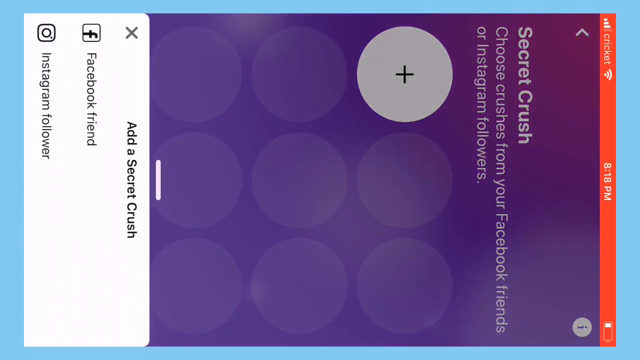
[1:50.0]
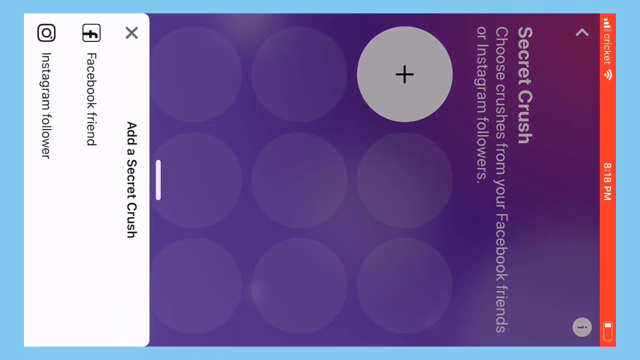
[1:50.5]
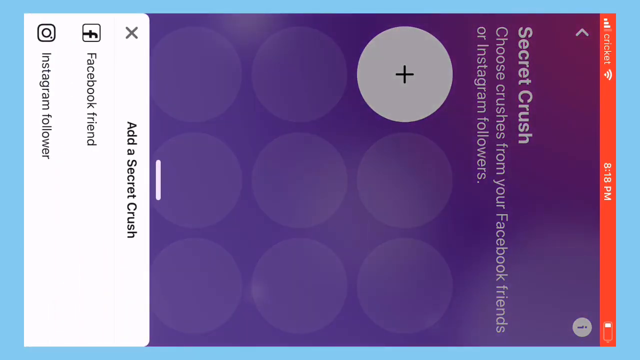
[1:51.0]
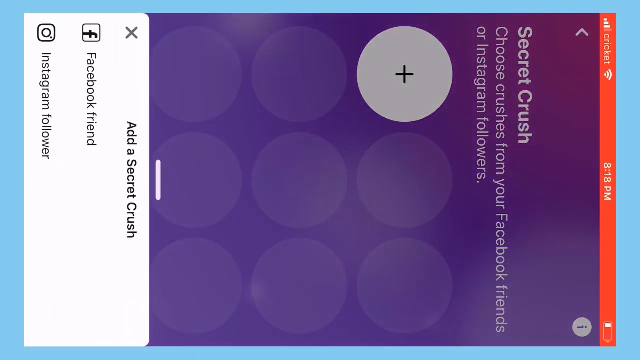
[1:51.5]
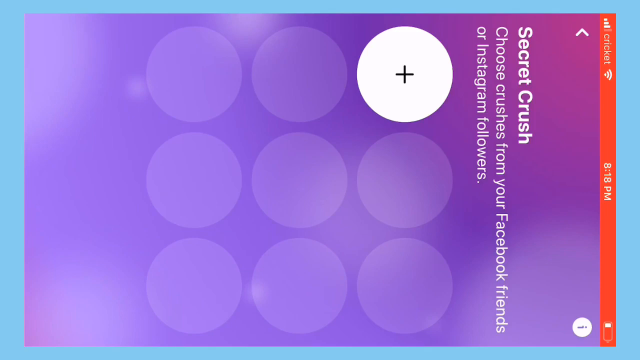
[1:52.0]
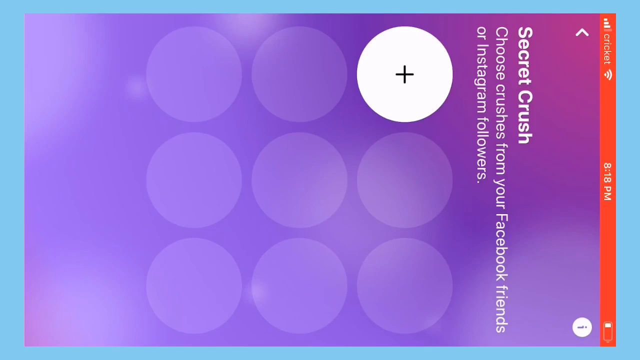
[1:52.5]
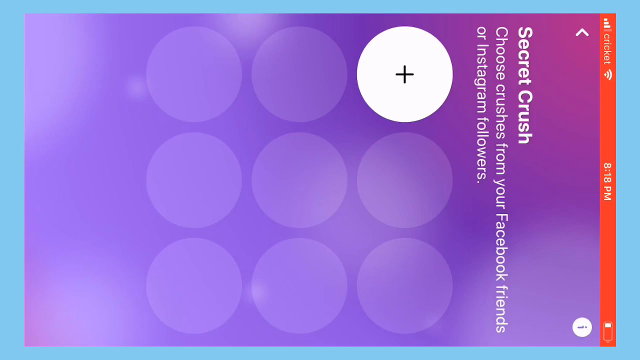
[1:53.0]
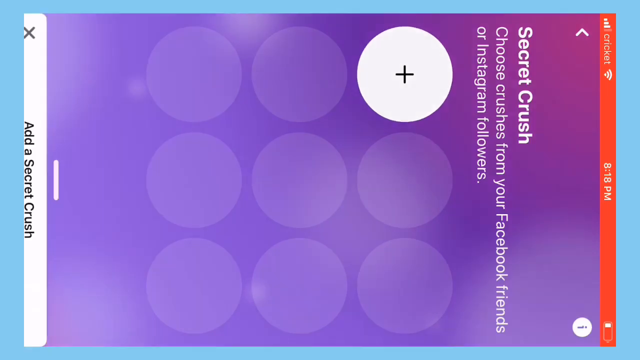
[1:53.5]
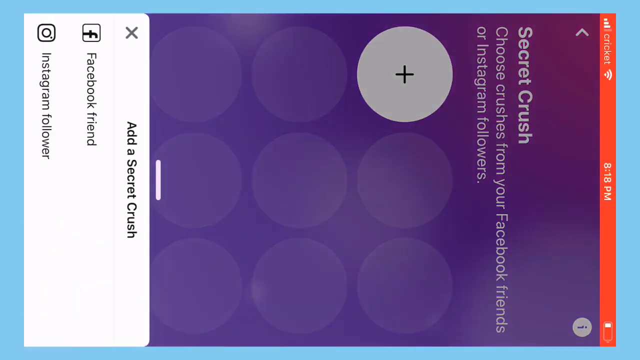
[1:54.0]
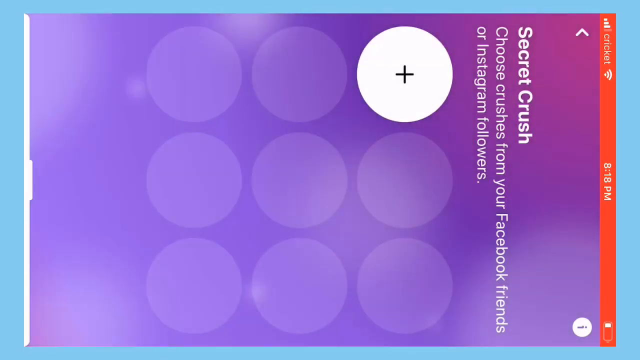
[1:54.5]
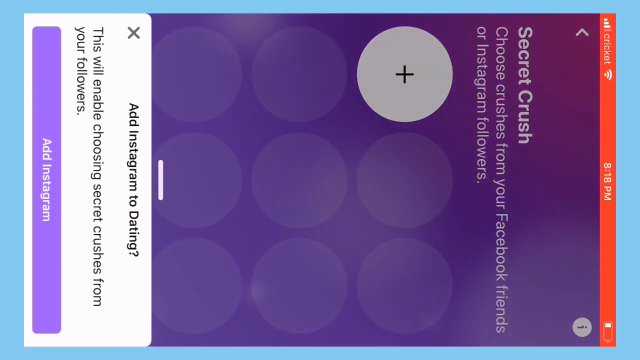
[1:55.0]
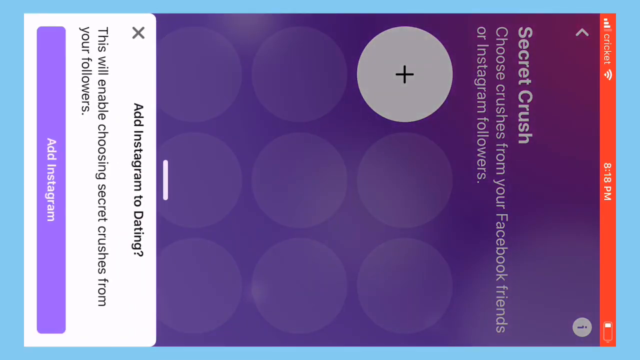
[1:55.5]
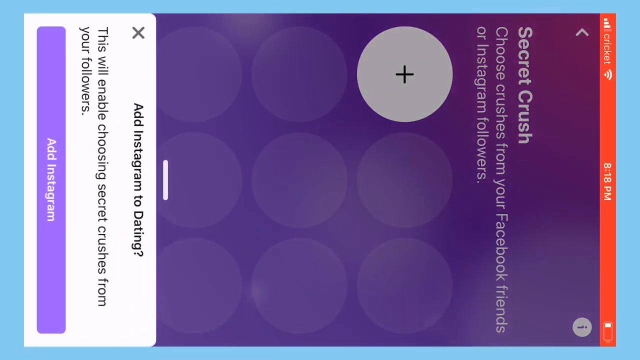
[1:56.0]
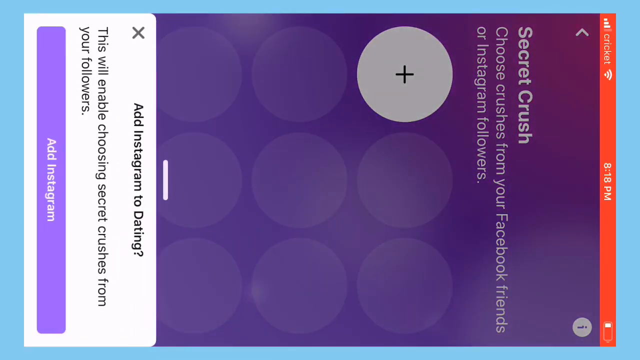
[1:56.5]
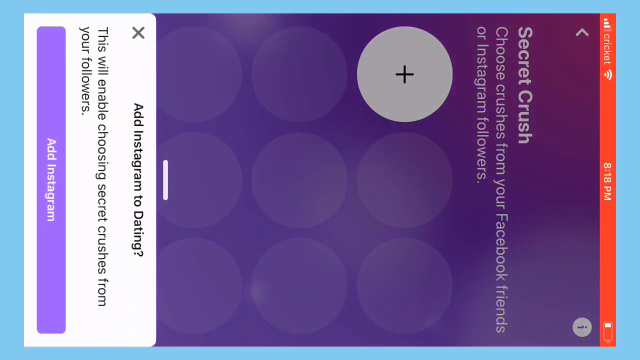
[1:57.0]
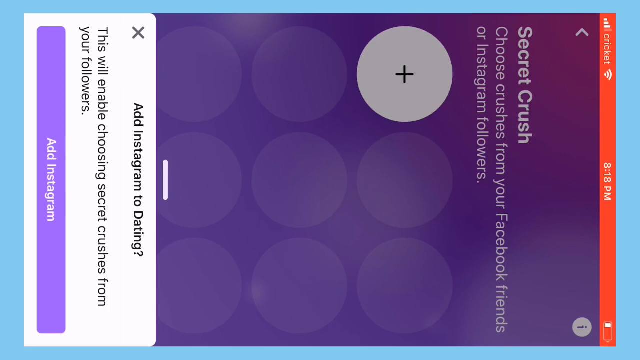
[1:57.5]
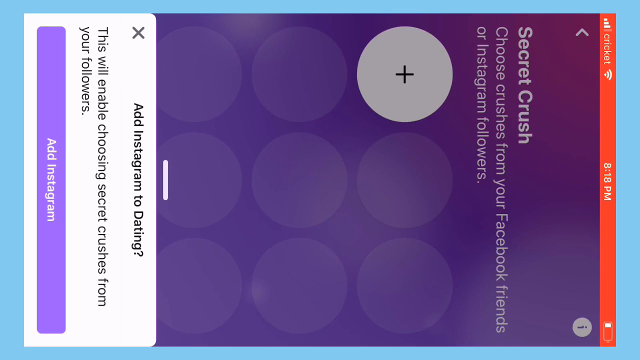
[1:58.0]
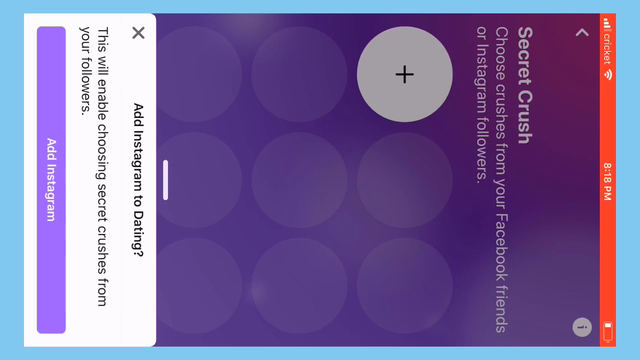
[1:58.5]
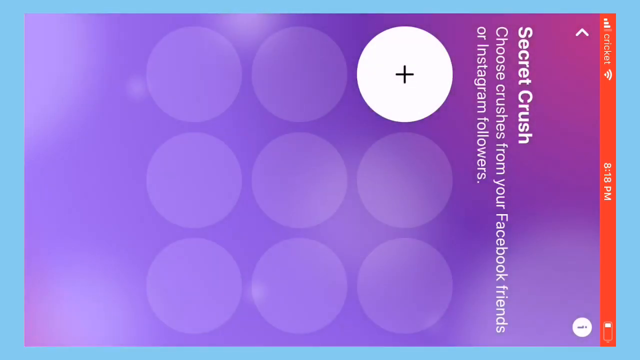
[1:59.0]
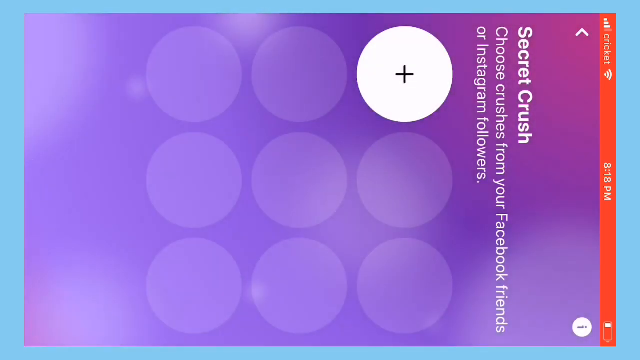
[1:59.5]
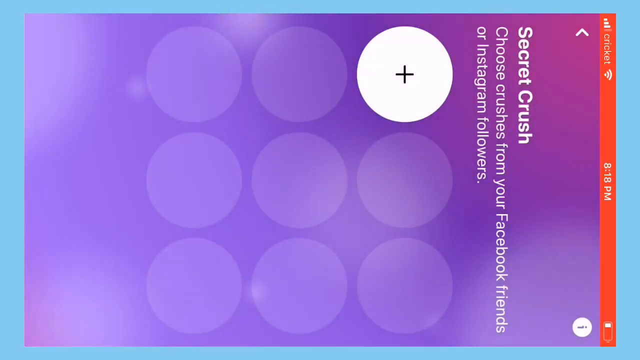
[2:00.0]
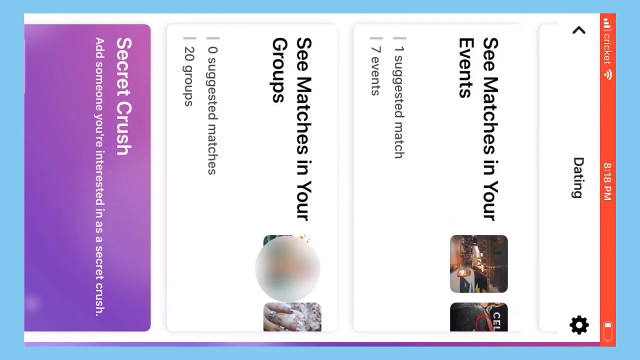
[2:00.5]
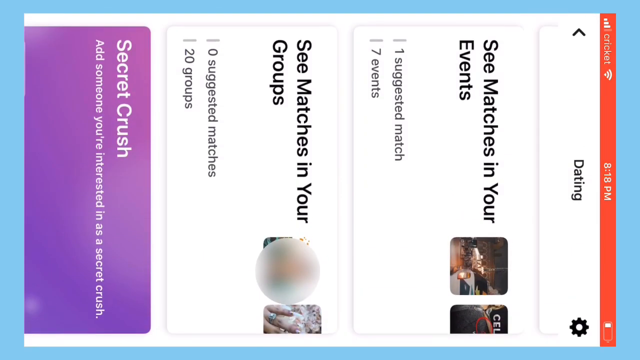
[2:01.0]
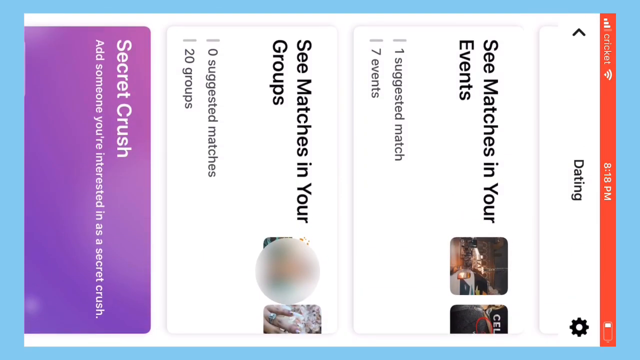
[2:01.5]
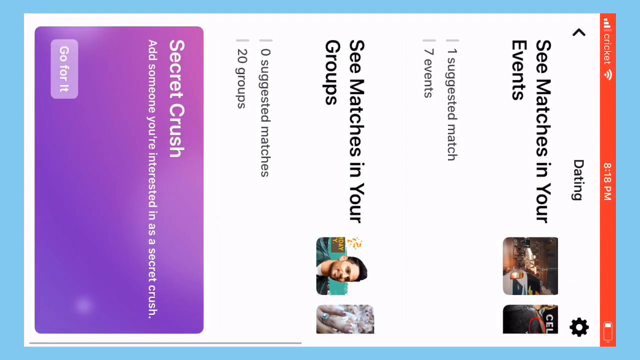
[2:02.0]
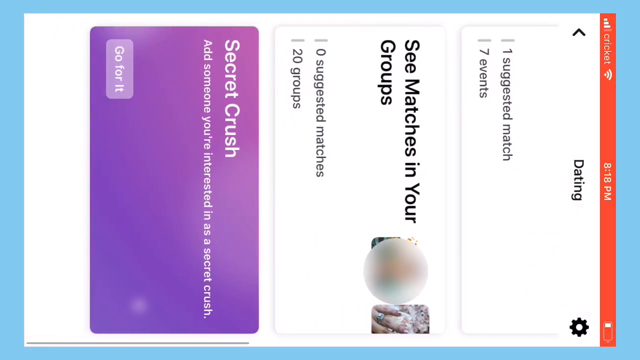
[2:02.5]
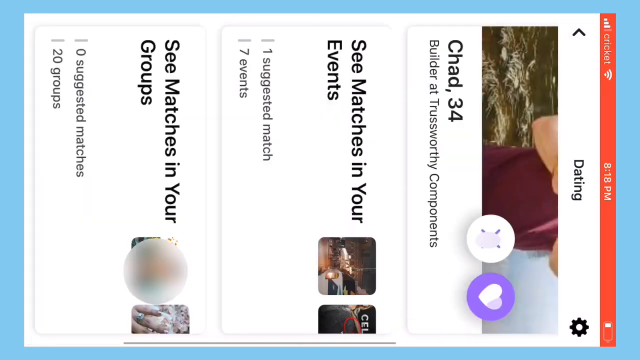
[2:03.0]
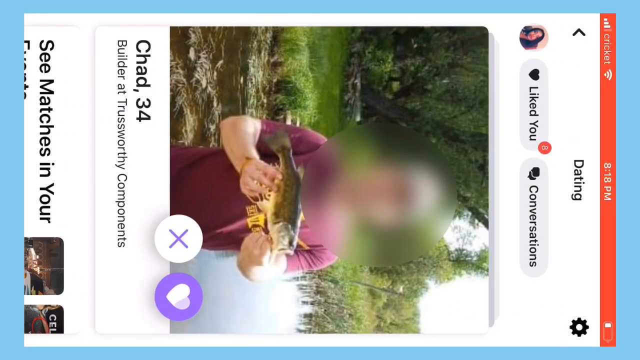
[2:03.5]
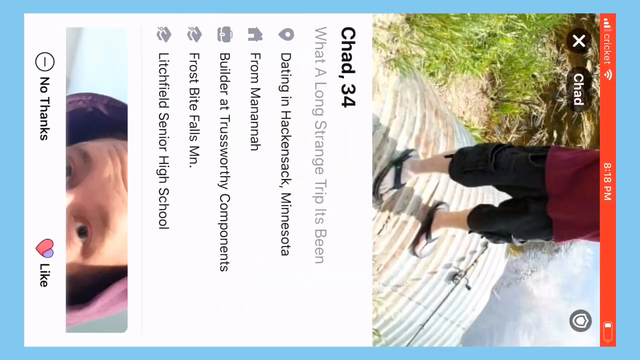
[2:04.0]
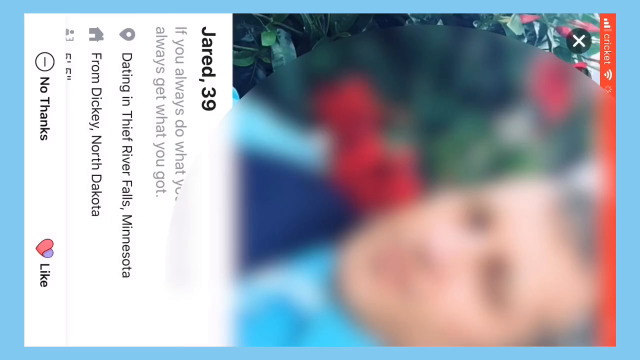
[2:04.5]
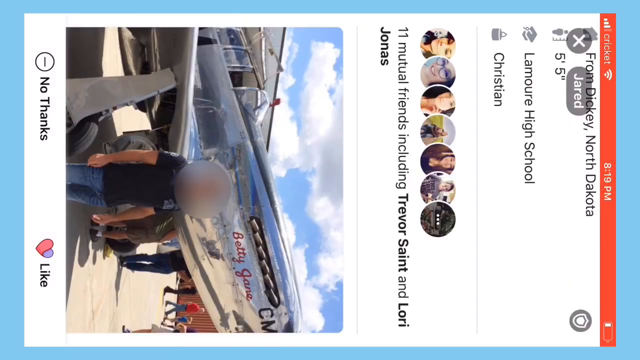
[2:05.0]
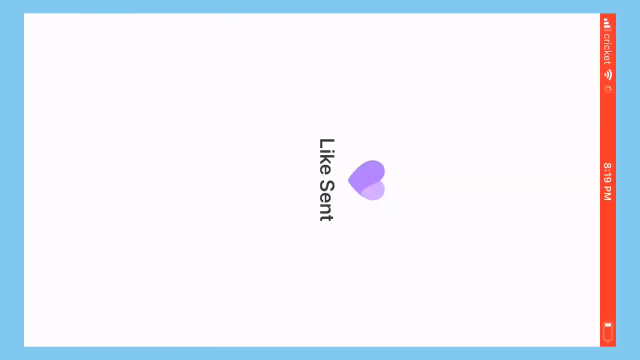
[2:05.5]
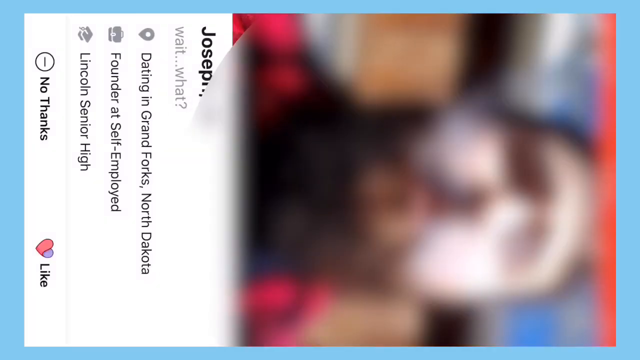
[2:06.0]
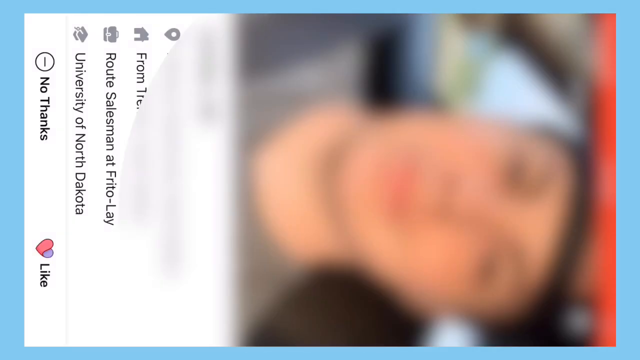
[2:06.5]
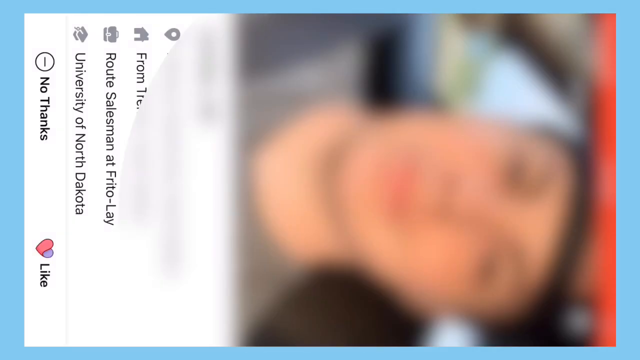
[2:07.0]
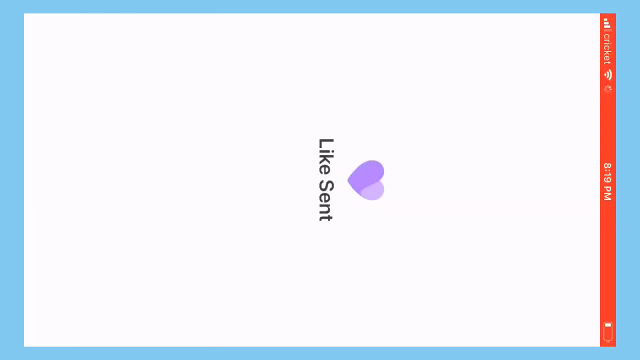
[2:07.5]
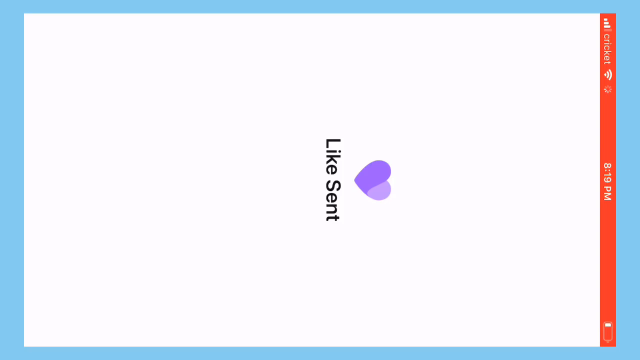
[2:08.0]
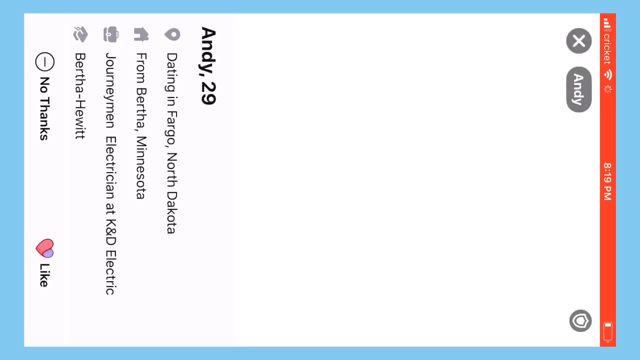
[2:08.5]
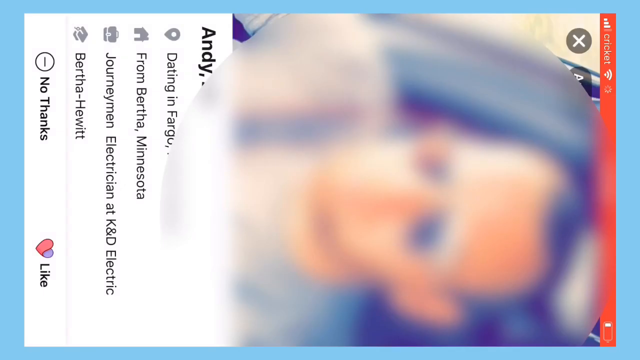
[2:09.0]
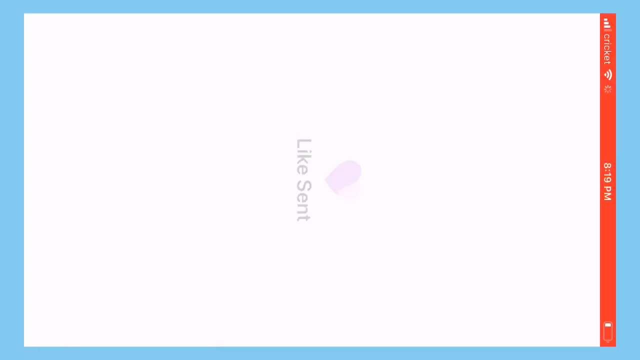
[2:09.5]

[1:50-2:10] A phone screen recorded in portrait mode is turned sideways to fit the white screen, so the top is on the right side of the video. Various menu screens of a dating app on social media are displayed. A white background has text reading "secret crush" and "Choose crushes from your Facebook friends or Instagram followers." A pop-up box at the very bottom of the phone screen, the left side of the video, reads "add a secret crush," "Facebook friend," and "Instagram follower." The pop-up disappears toward the left of the video, comes back from the left going right, disappears, and reappears as a different pop-up reading "add Instagram to dating," with a large purple button at its bottom reading "add Instagram." The pop-up disappears, and the person swipes to a different screen divided into three sections under the title "dating" at the very top. The first section reads "see matches in your events," the second reads "see matches in your groups," and the final one, at the very bottom of the phone screen and on the left of the video, reads "secret crush, add someone you're interested in as a secret crush." The person scrolls up and down on the page.